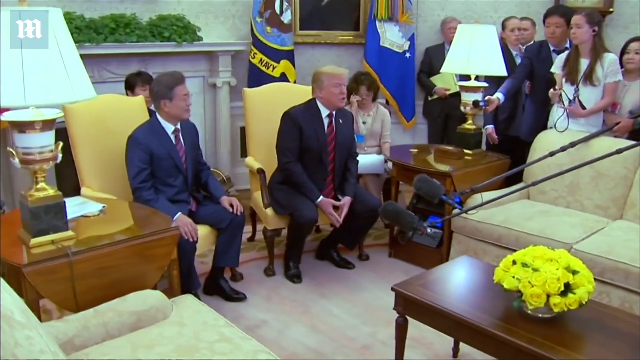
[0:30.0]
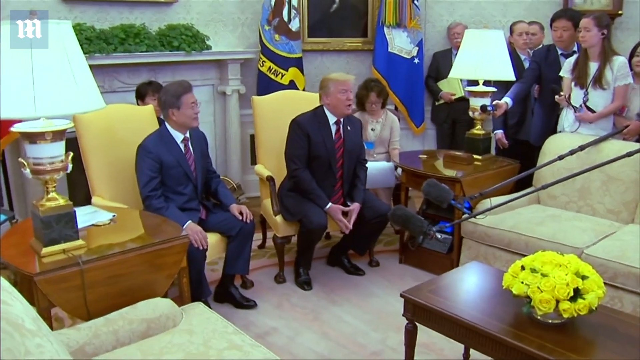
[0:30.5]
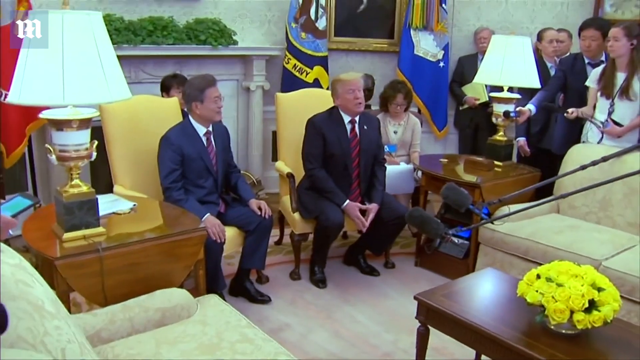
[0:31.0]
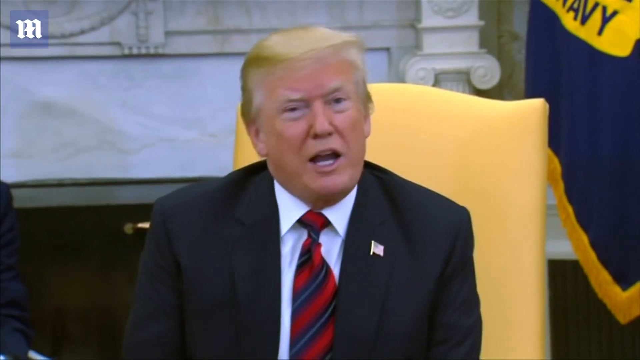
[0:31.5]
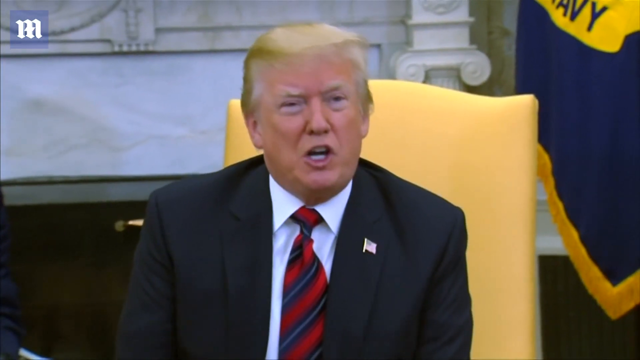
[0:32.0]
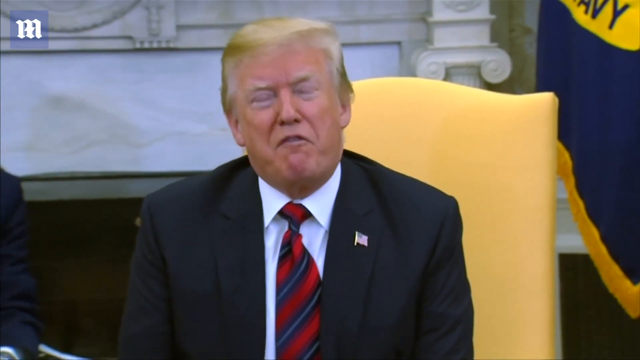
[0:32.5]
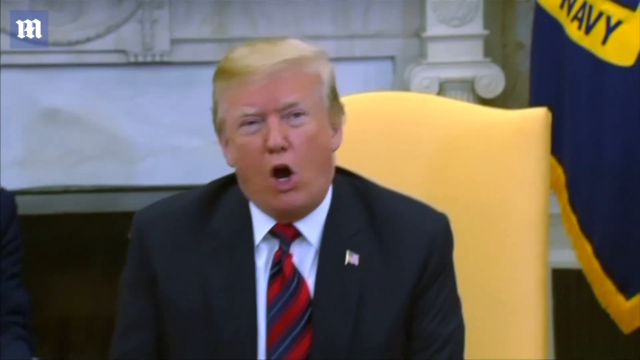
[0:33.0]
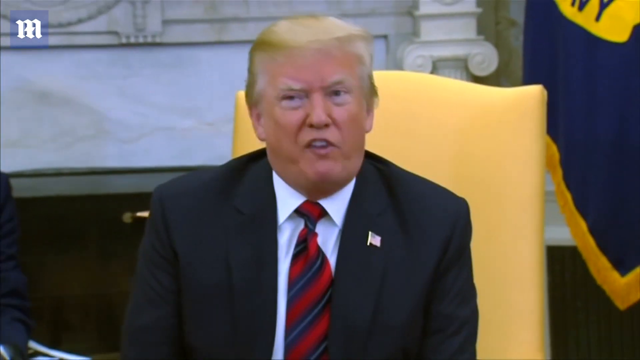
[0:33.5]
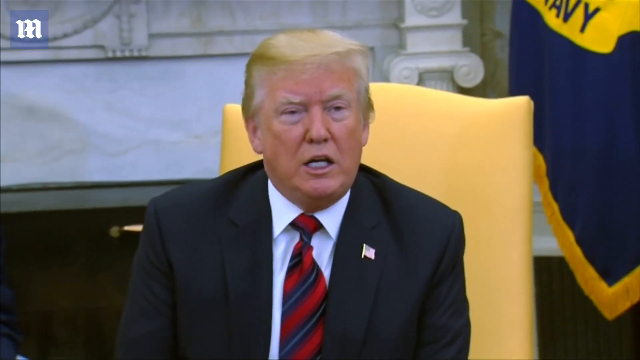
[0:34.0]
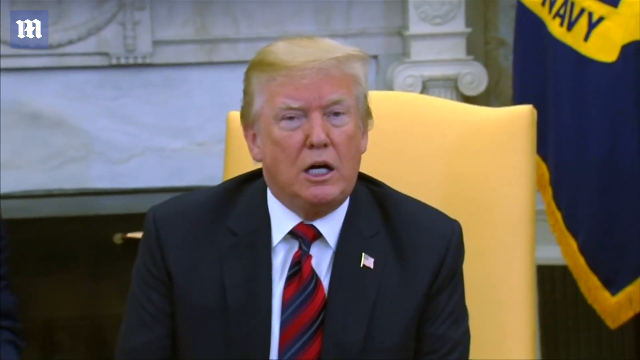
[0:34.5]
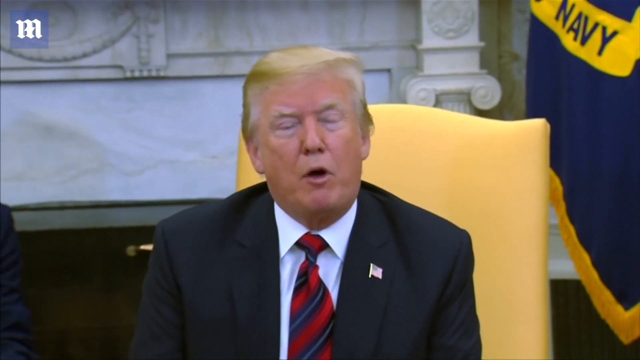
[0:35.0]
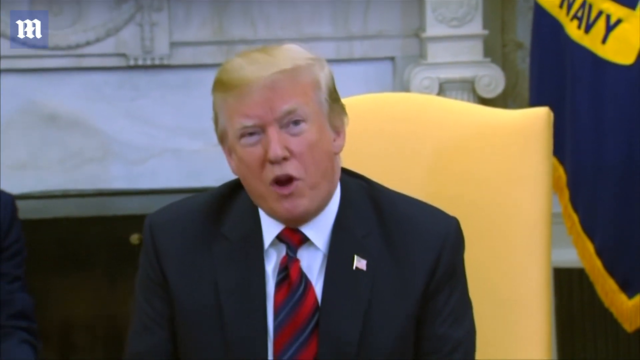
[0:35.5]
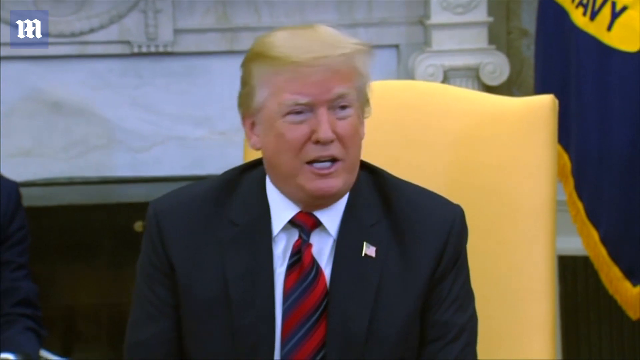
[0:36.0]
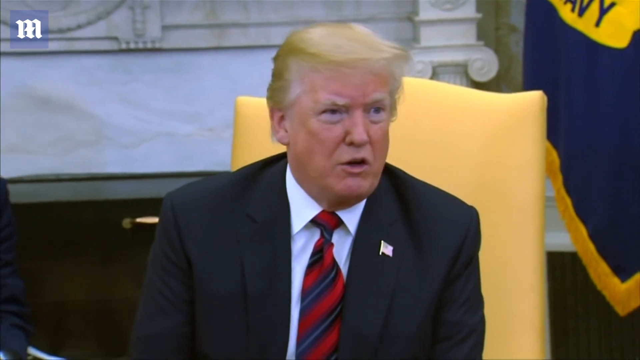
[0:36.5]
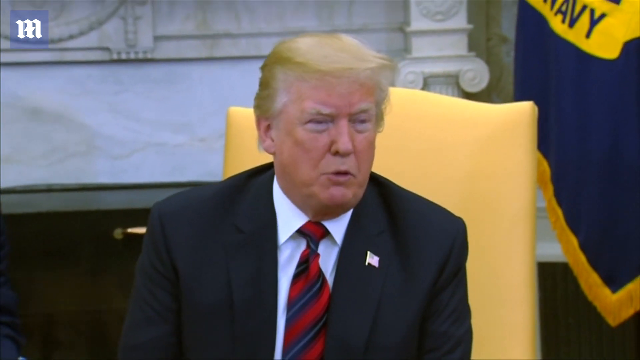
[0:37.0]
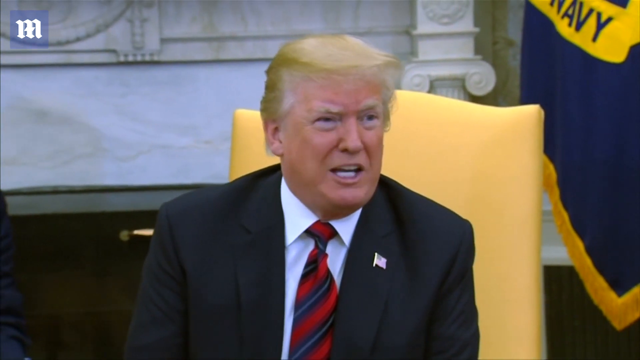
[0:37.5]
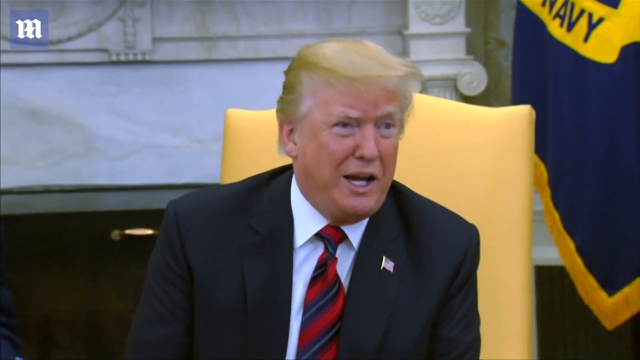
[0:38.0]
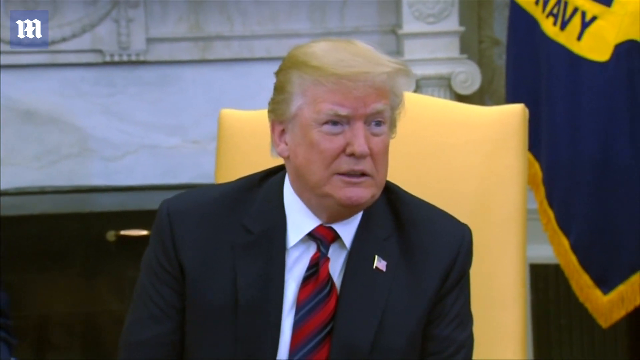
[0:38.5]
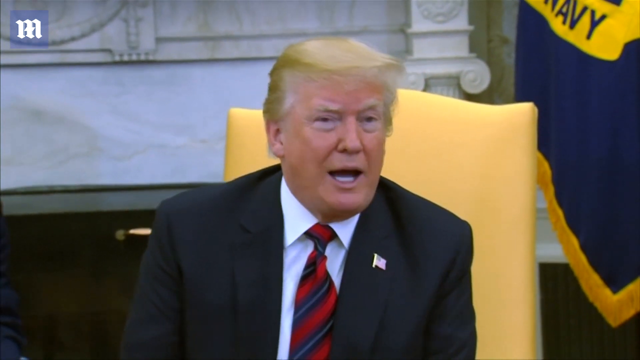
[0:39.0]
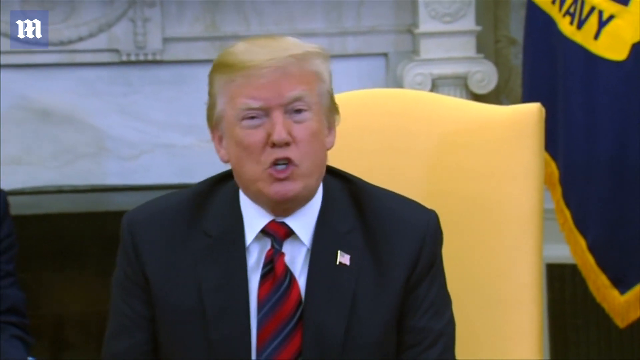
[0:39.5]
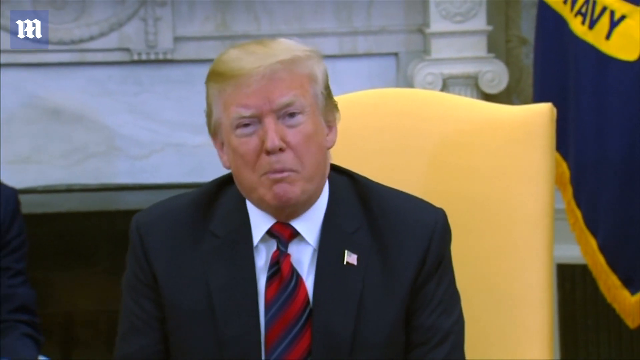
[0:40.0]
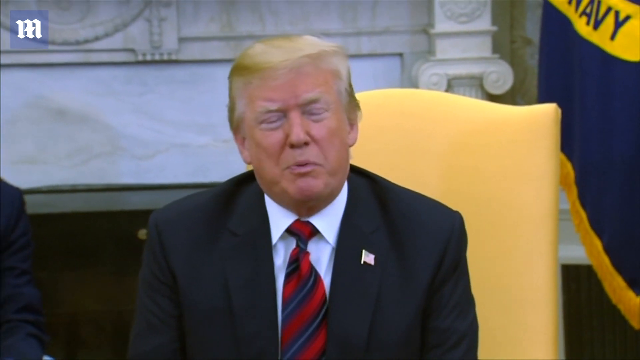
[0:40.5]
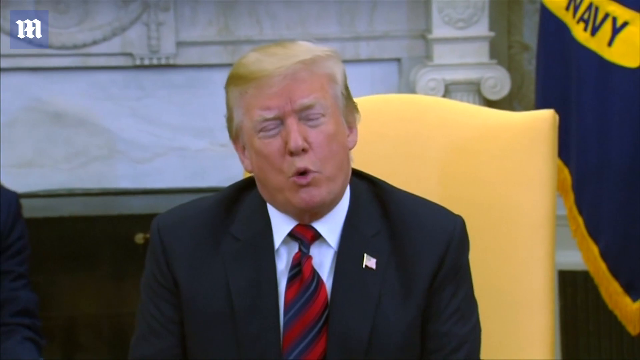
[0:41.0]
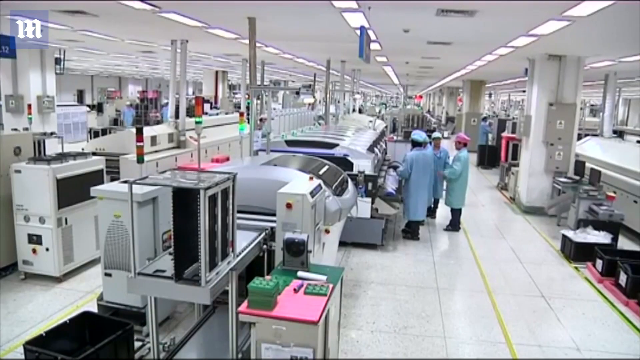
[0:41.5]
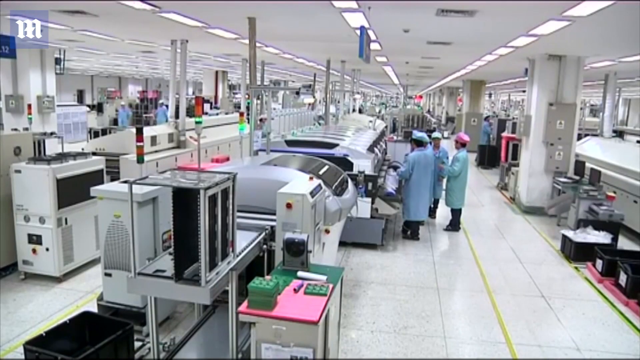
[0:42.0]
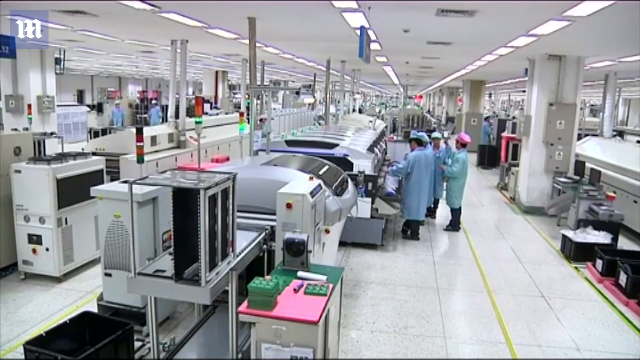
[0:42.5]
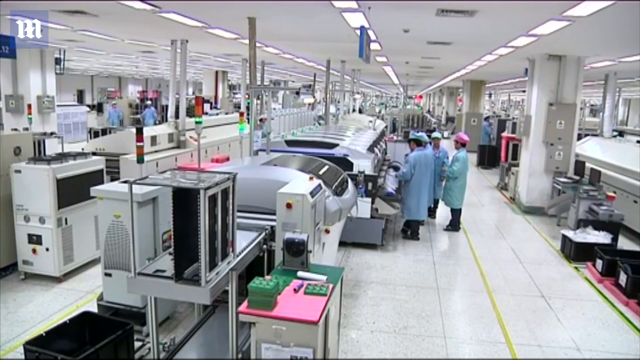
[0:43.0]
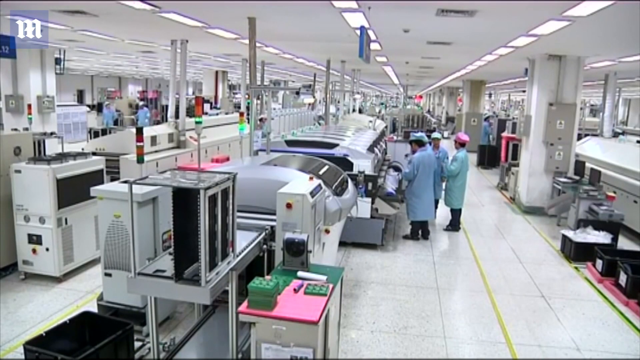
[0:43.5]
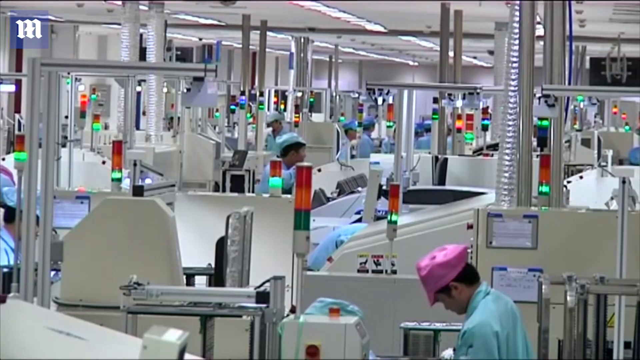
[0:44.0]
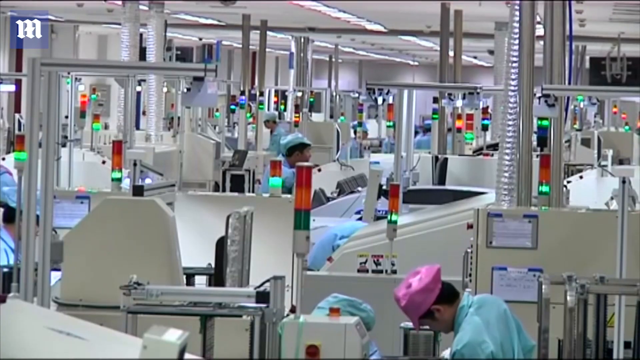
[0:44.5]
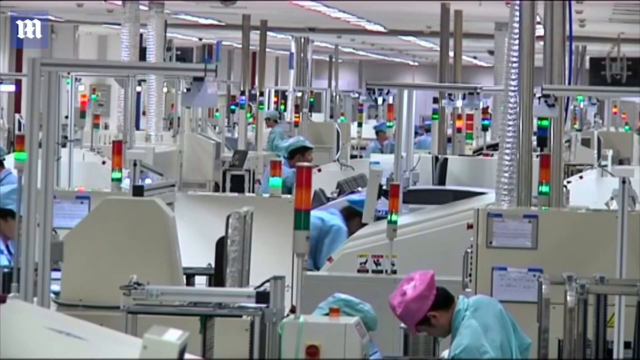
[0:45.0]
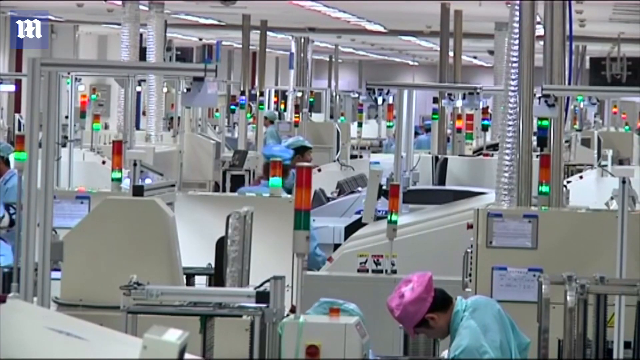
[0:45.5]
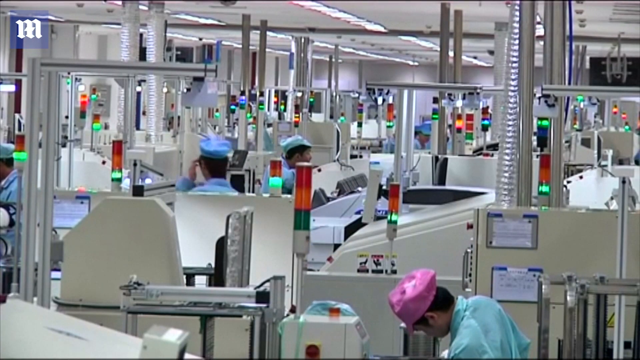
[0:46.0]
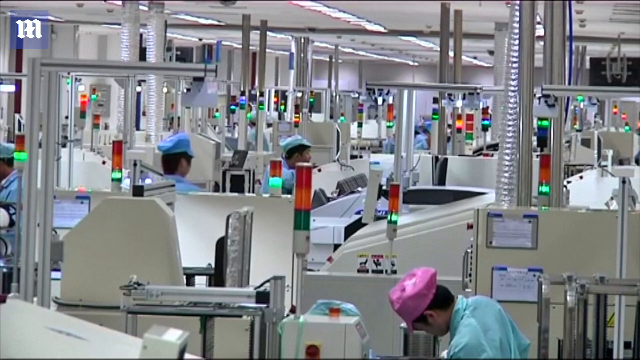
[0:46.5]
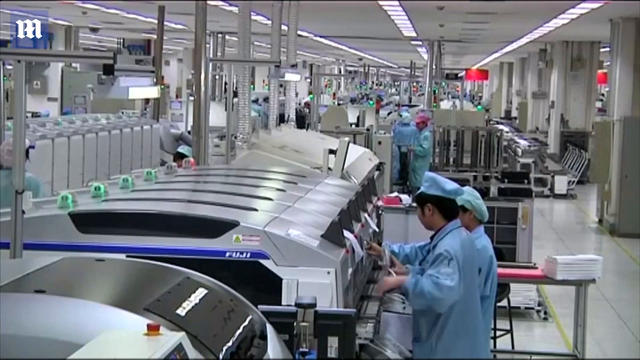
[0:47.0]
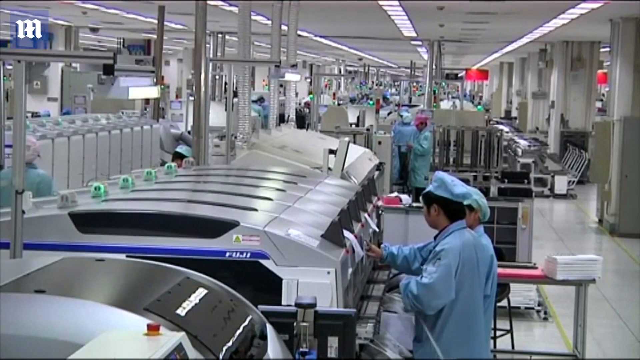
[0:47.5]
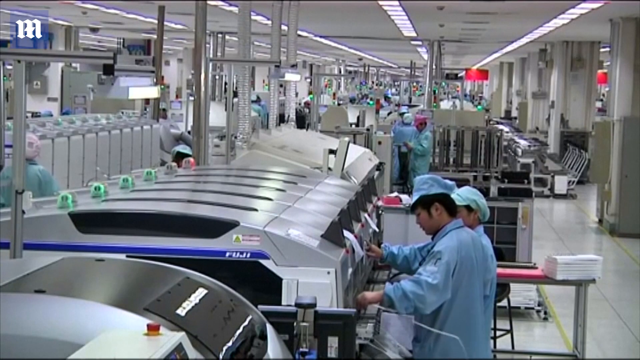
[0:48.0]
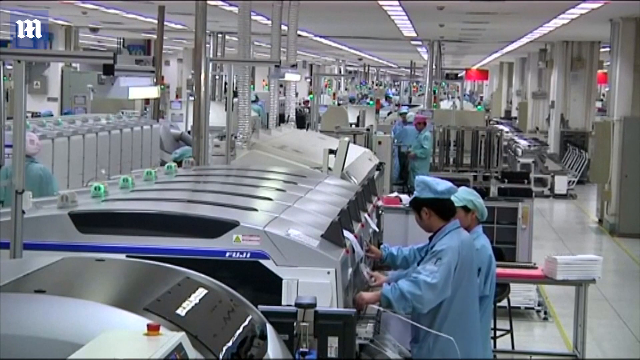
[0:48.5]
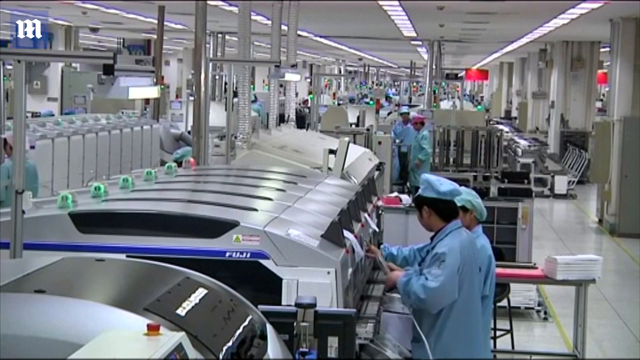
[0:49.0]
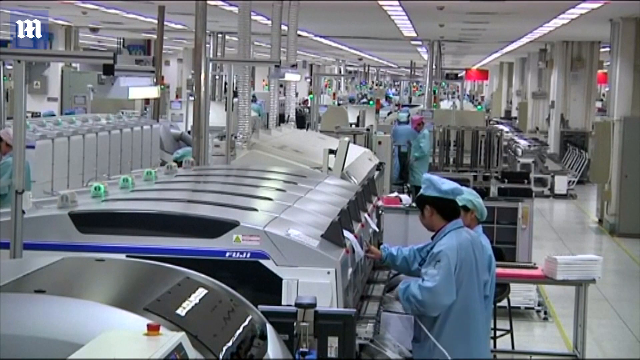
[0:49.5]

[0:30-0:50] Donald Trump and the ZTE co-founder continue their bilateral conversation and dialogue.